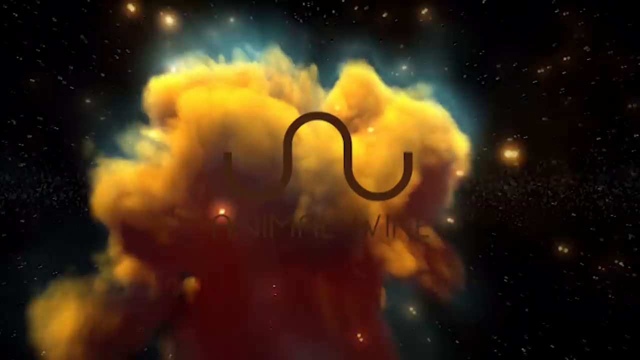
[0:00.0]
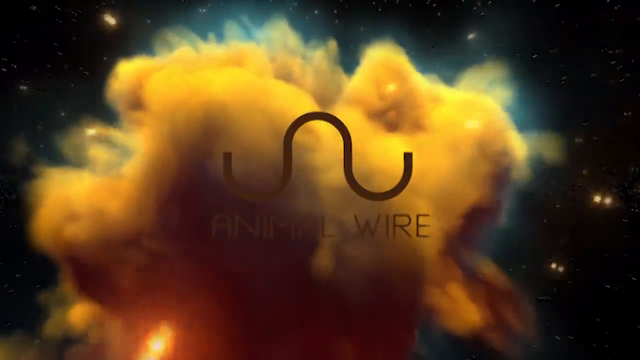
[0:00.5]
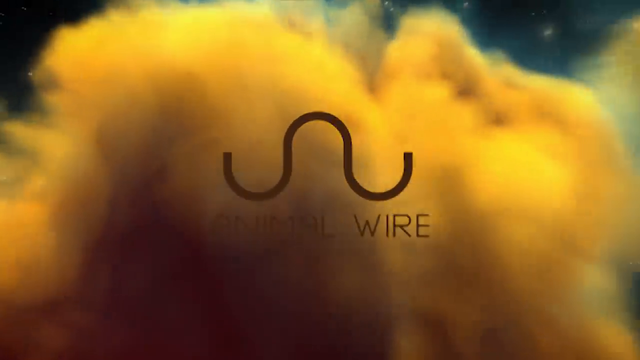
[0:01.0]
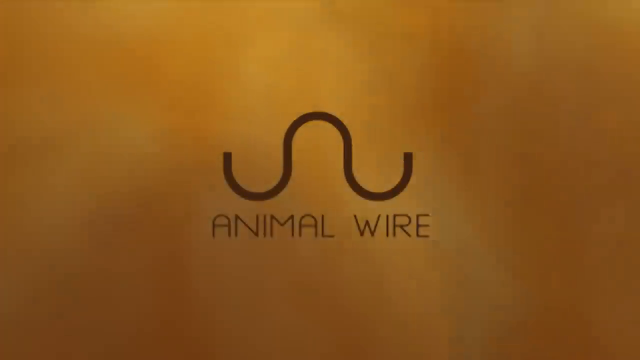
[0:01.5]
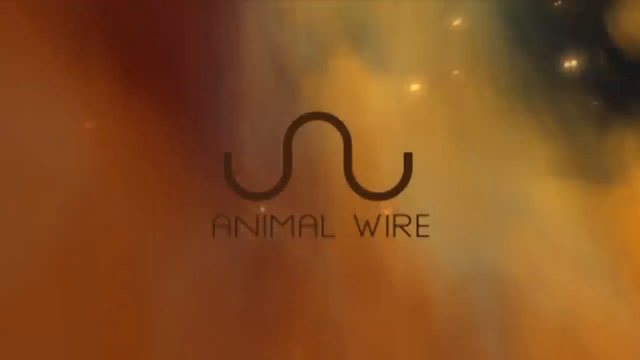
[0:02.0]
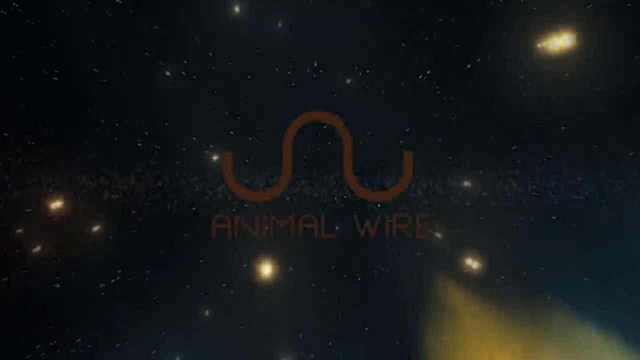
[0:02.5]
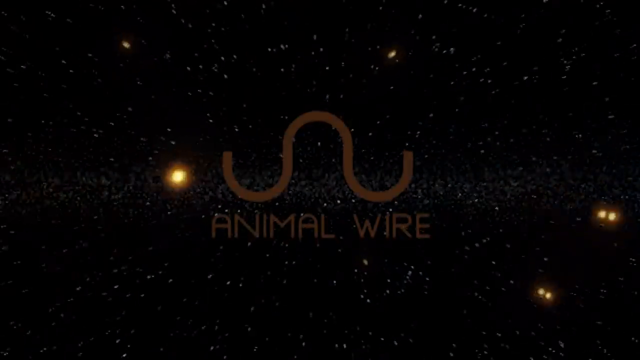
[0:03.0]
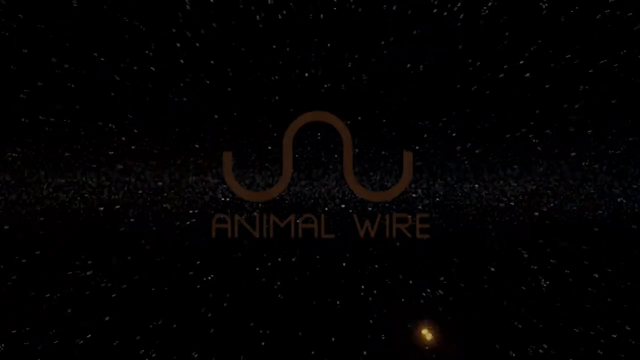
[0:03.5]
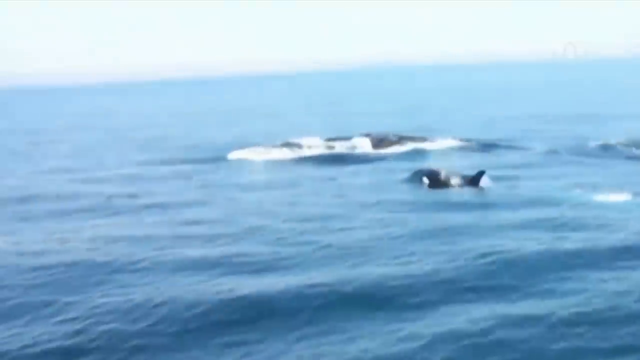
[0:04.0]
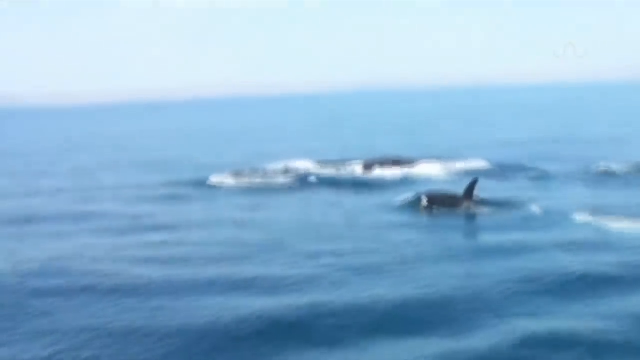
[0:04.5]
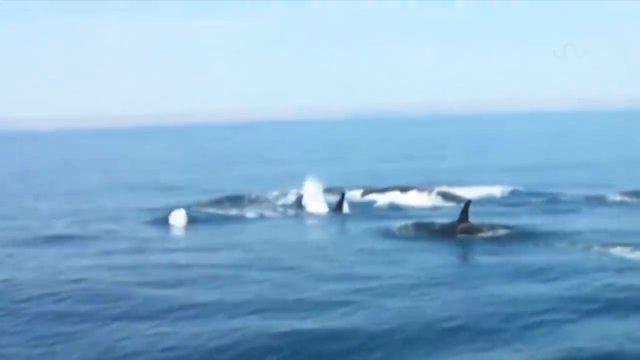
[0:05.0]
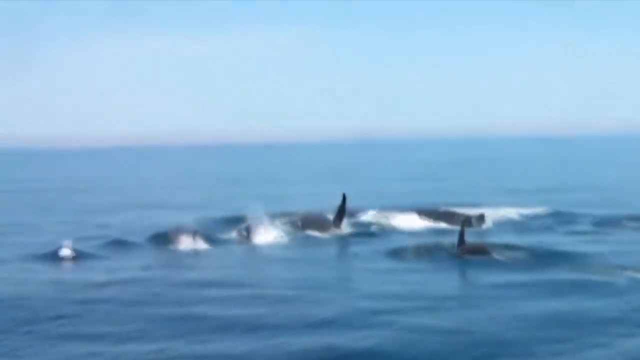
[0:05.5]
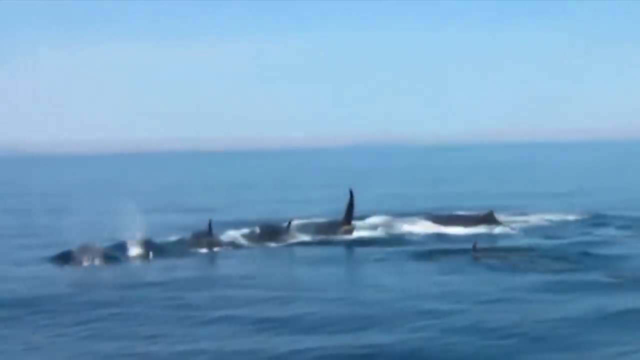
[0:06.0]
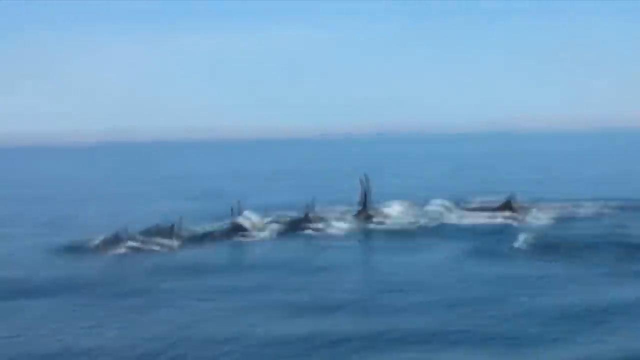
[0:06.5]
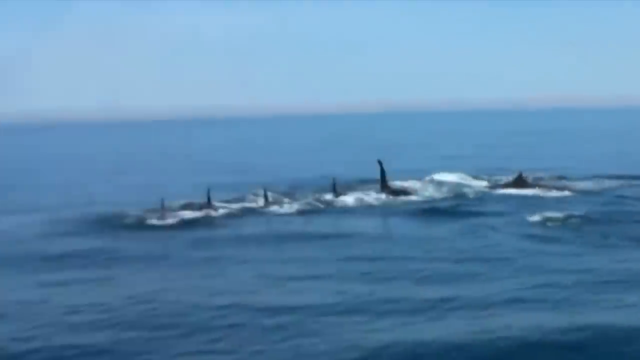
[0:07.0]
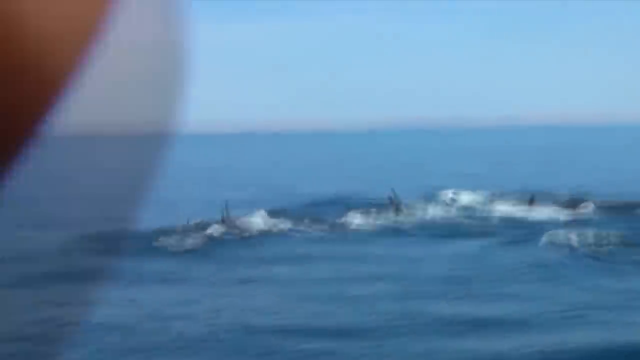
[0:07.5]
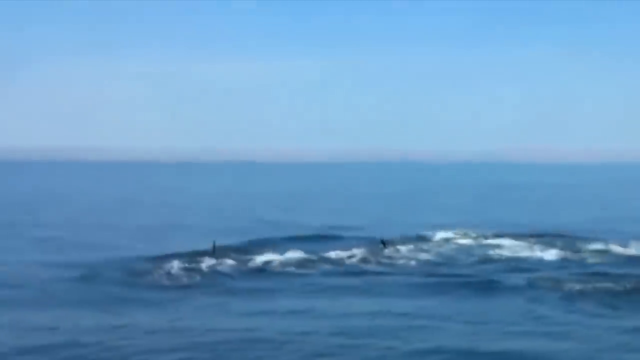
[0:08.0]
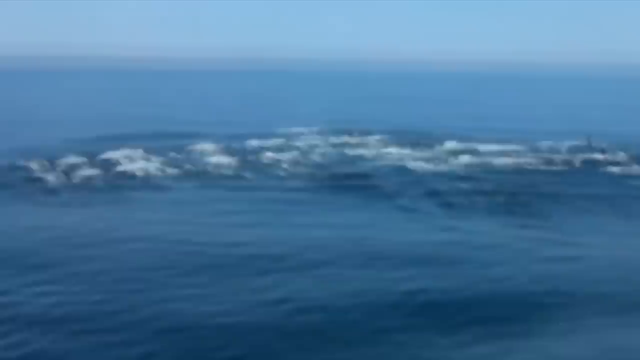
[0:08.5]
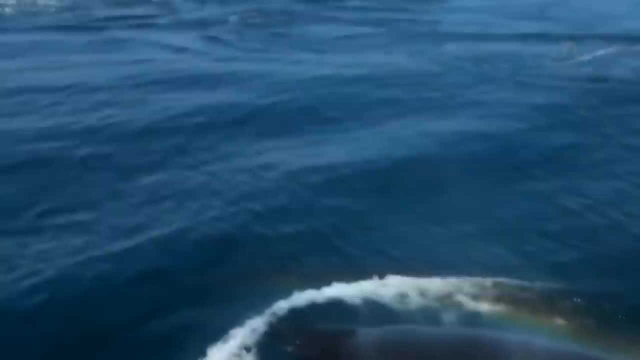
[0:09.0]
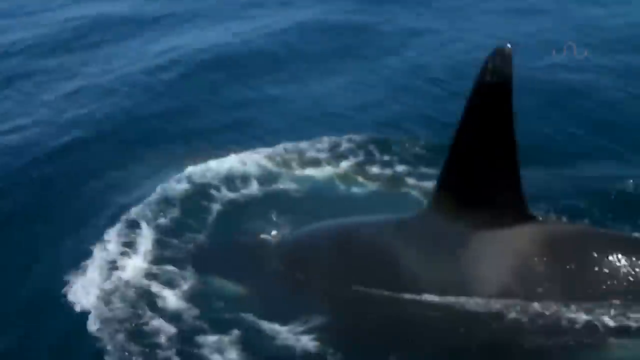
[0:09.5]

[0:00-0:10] The video opens with an introduction for a video brought to you by Animal Wire. Once the intro screen goes off, a pod of apparently seven orcas appears in the open ocean. They are lined up in a parallel row and come up from below the water, slightly raising their backs out of the water and exposing their fins; almost simultaneously, all seven backs and fins are exposed as they dive back down. The camera then zooms along the boat side of the cameraman, where an eighth orca slowly raises its backside out of the water, exposing its dorsal fin, and then disappears below the water.